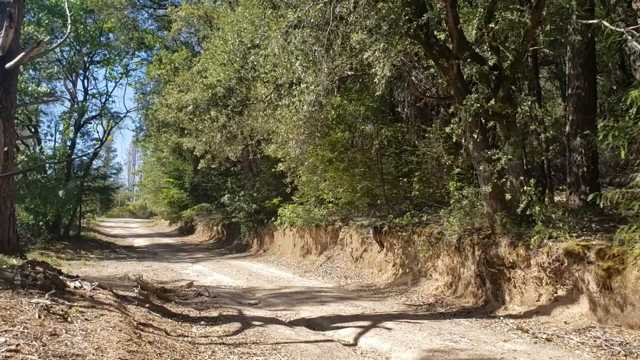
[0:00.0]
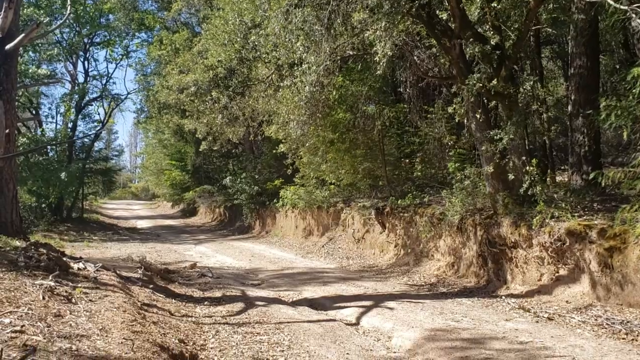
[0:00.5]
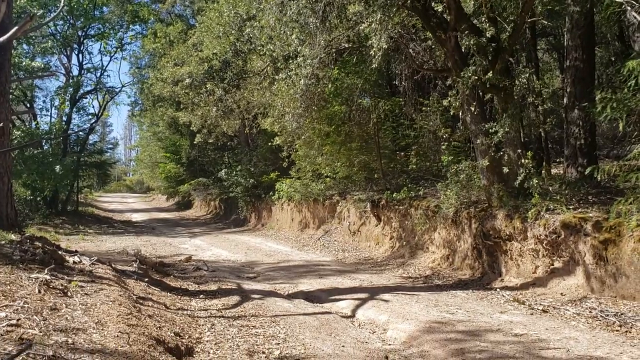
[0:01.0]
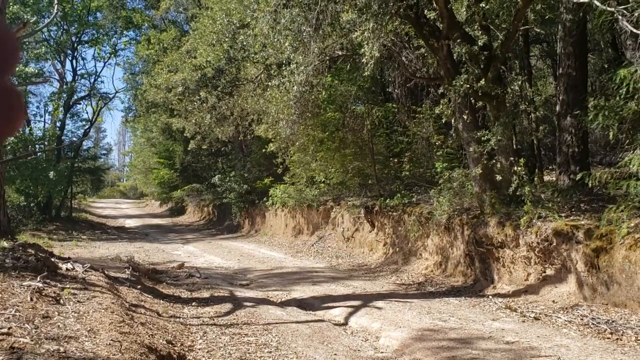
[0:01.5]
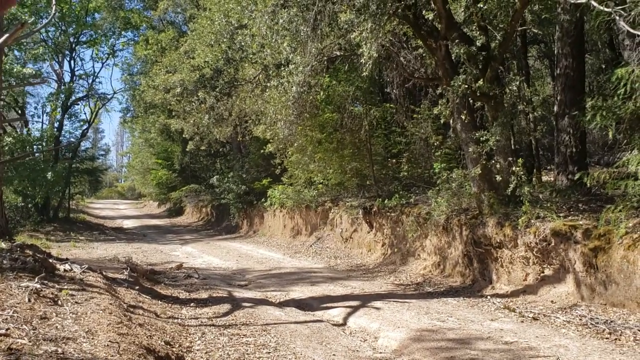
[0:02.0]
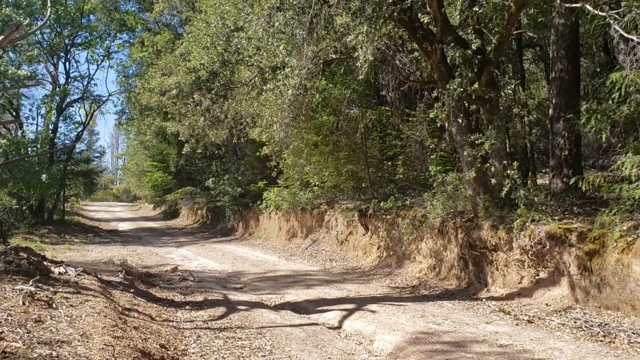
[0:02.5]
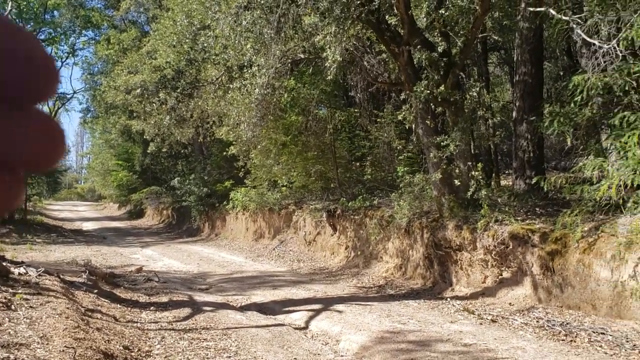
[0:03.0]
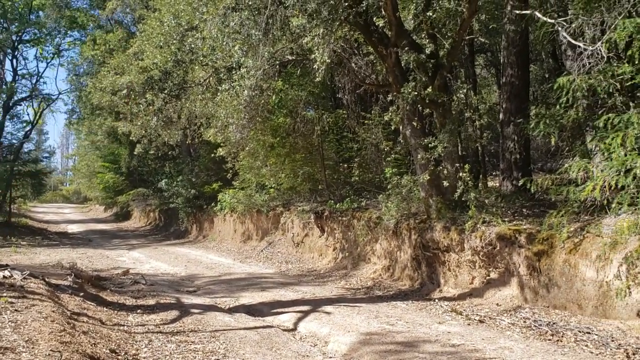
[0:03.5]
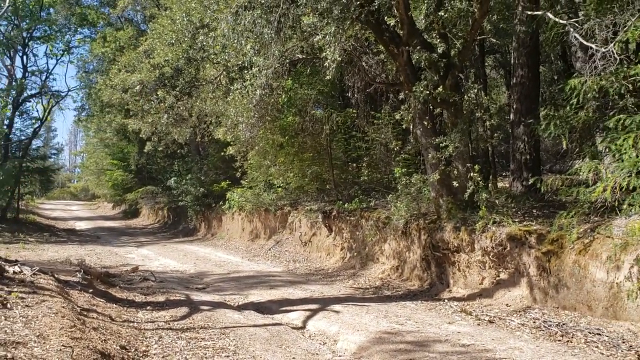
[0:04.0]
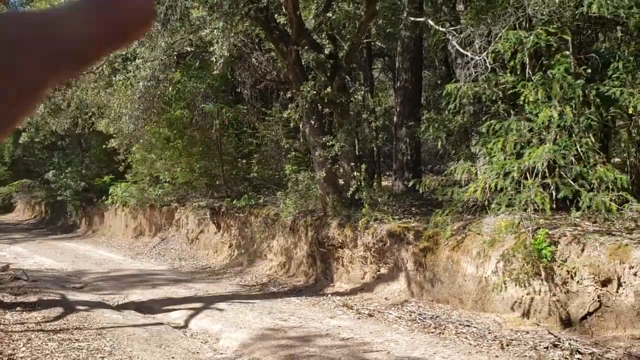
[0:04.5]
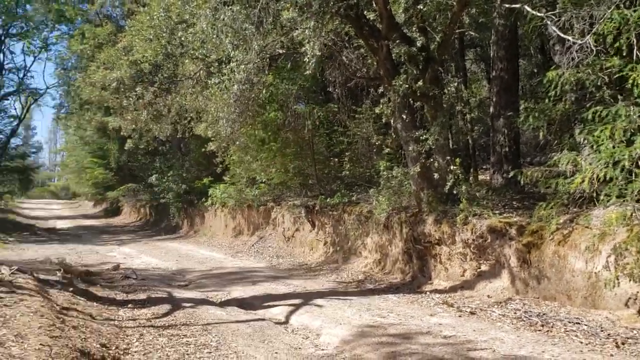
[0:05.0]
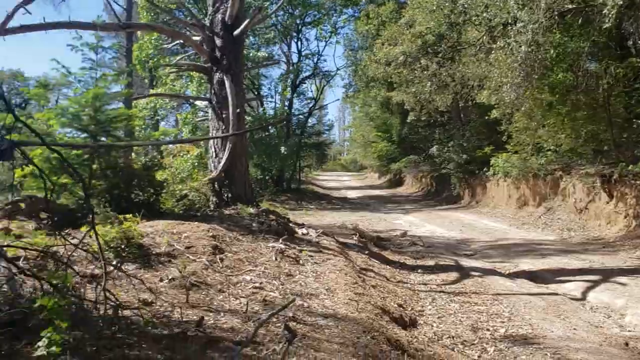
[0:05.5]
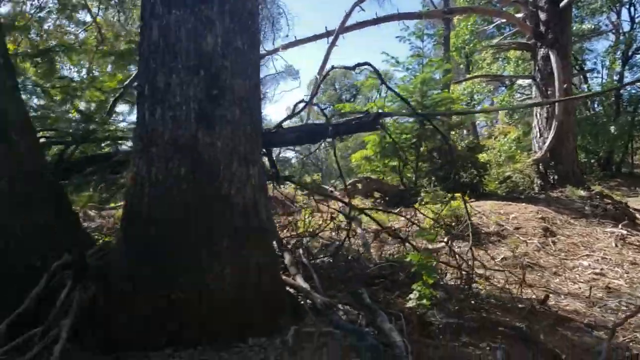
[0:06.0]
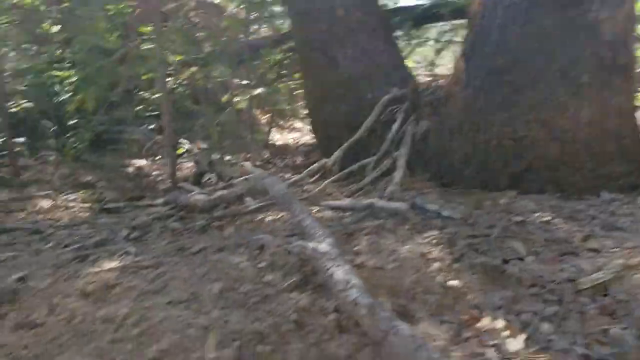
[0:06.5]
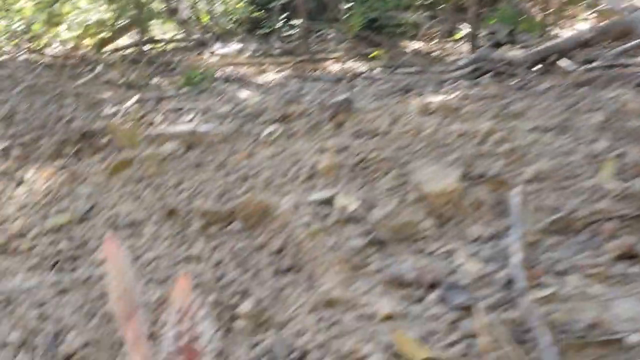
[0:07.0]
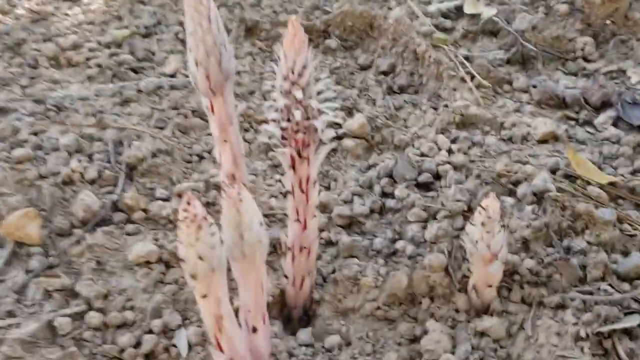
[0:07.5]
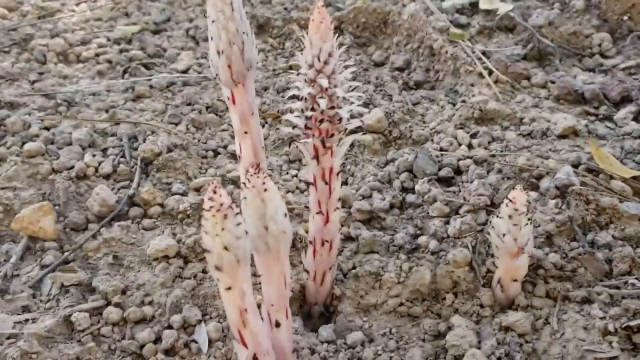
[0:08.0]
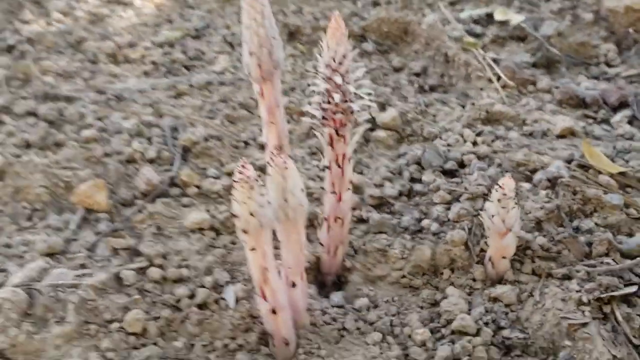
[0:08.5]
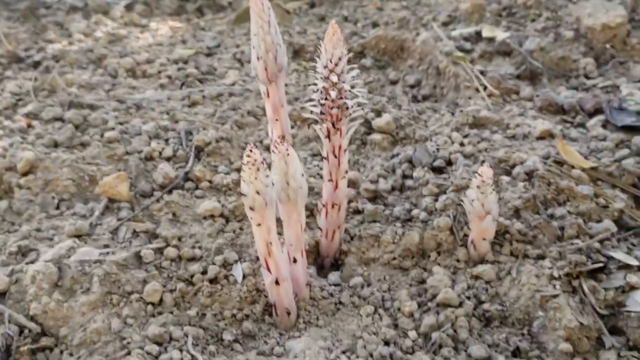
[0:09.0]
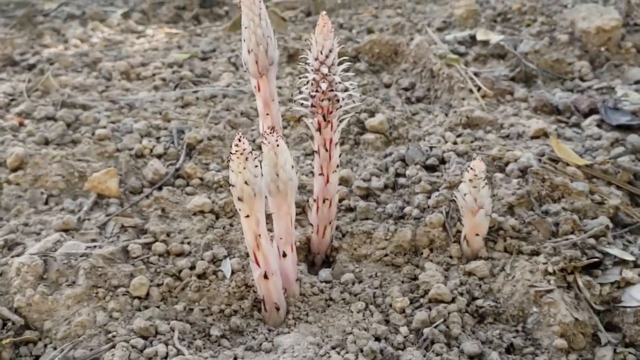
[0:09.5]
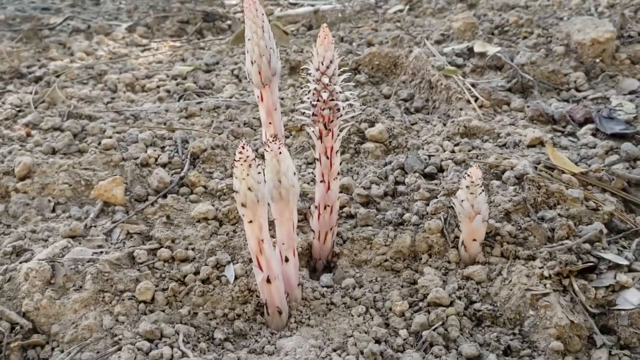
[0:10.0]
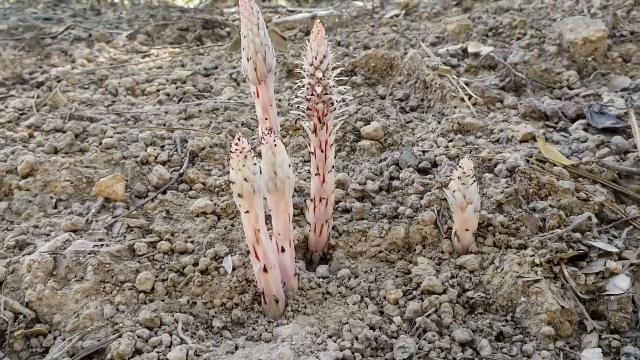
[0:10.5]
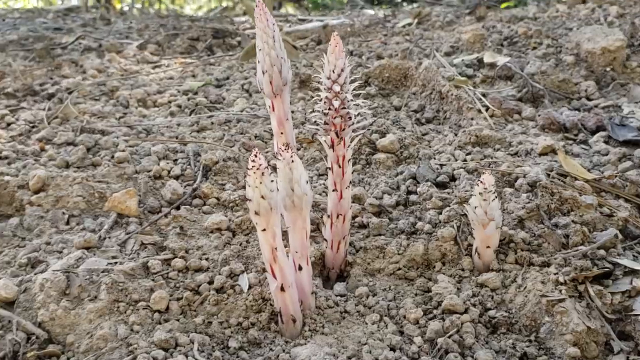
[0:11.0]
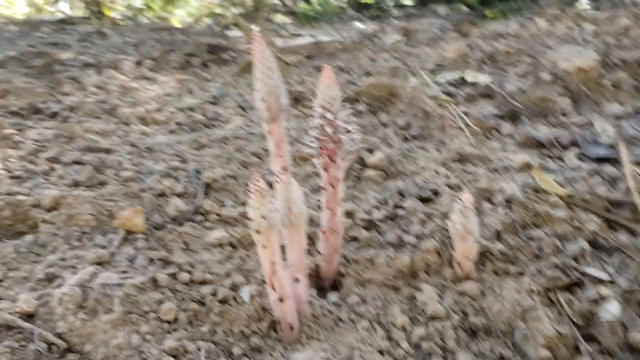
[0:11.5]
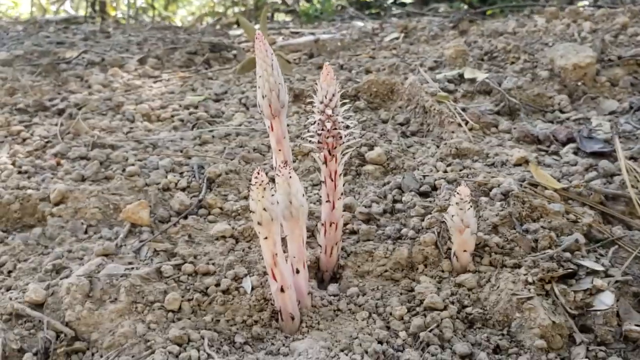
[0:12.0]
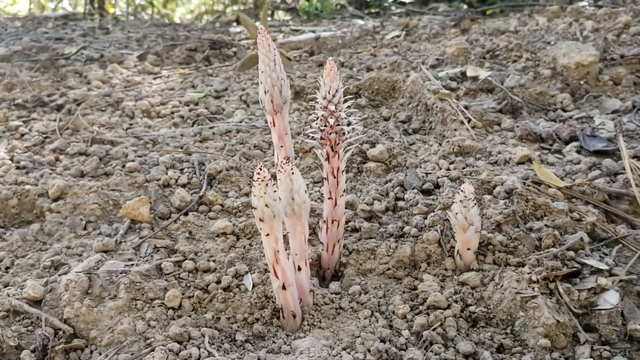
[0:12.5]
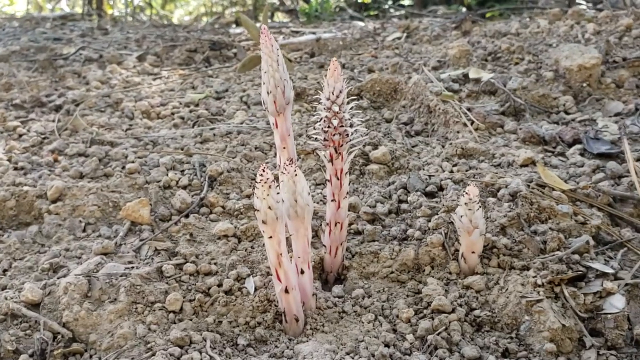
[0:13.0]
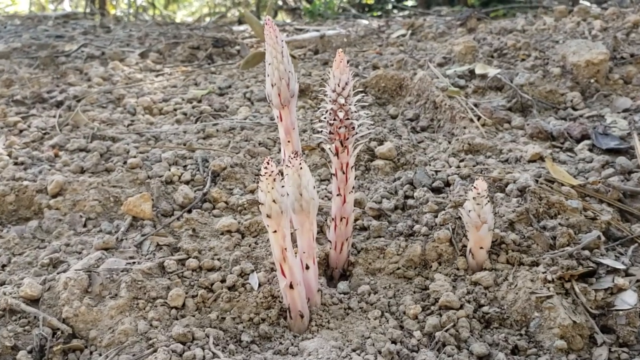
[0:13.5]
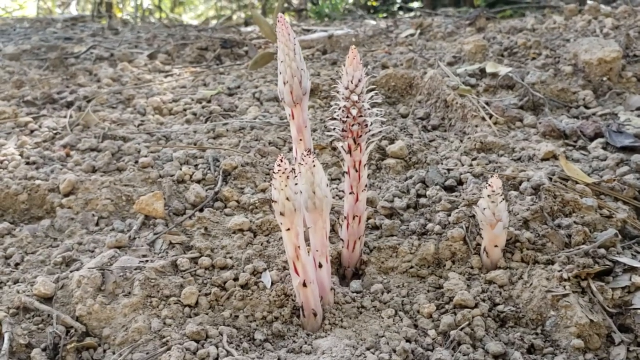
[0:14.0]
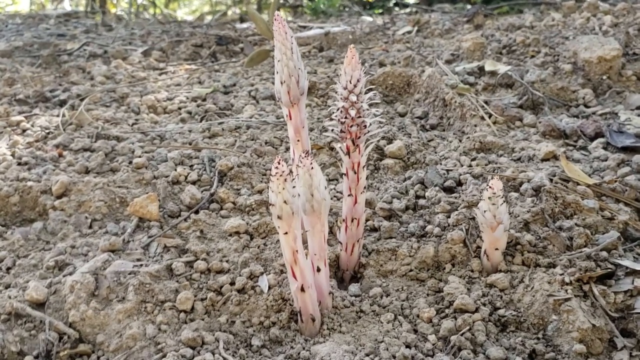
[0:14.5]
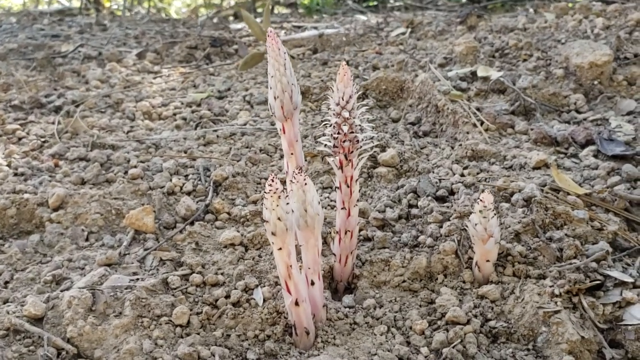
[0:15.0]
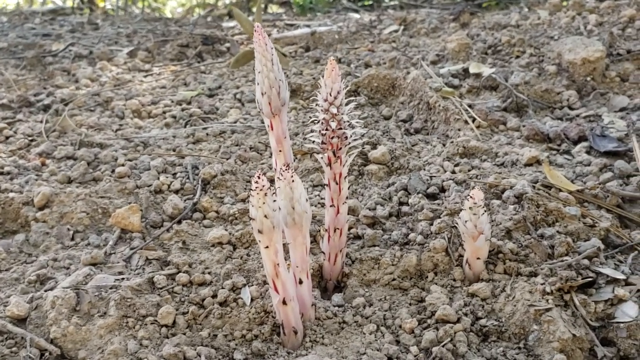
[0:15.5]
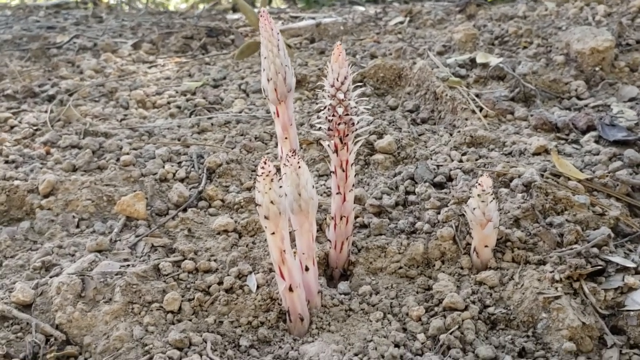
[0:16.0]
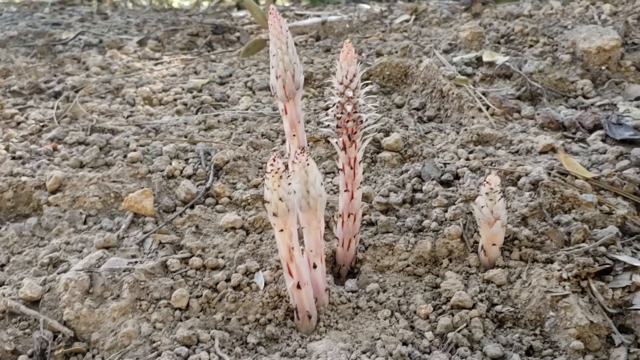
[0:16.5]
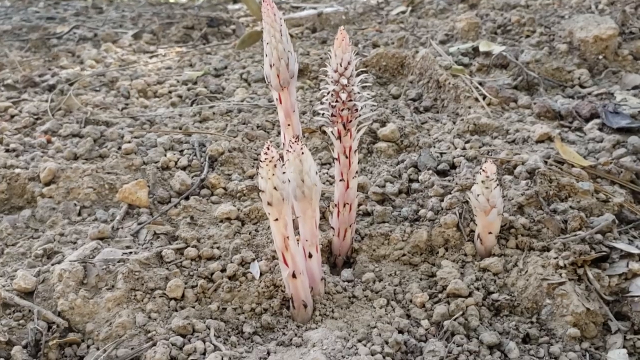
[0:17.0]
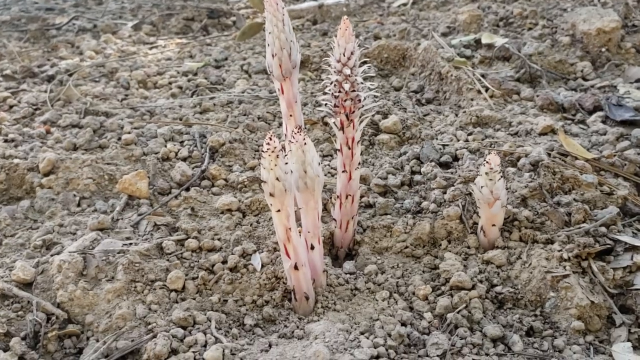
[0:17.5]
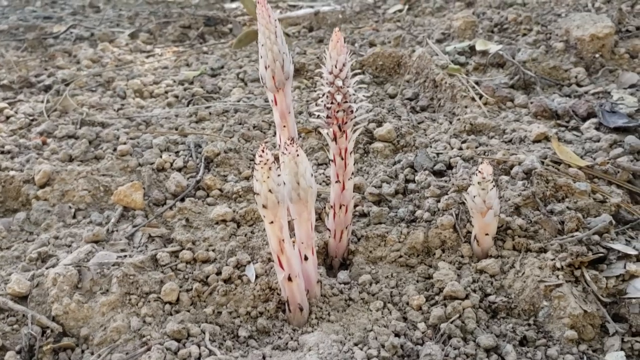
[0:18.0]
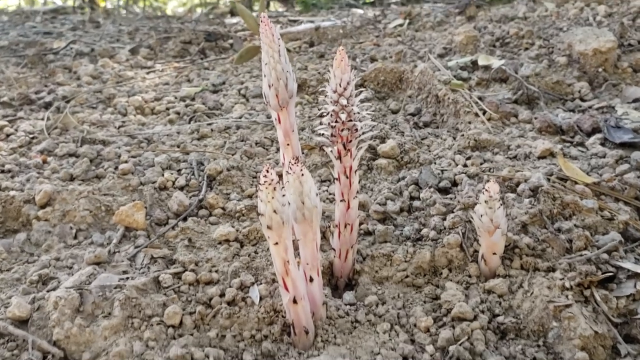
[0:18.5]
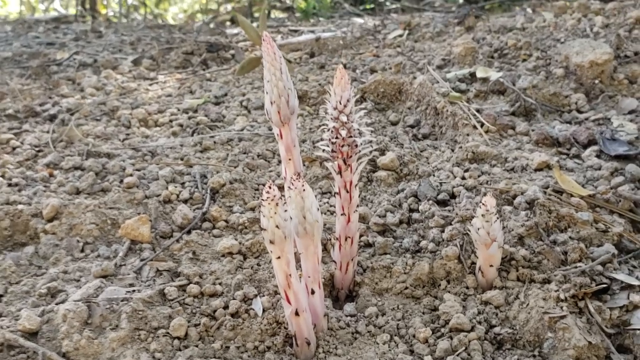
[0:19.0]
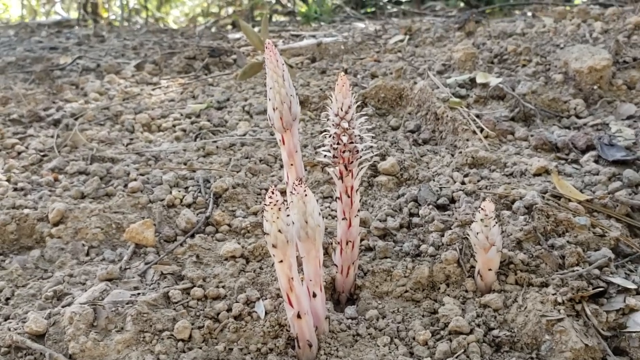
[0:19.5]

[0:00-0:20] A plant is covered in many spikes and thorns; it is creamy in color, with some red thorns on it. Vegetation in a forest is shown.